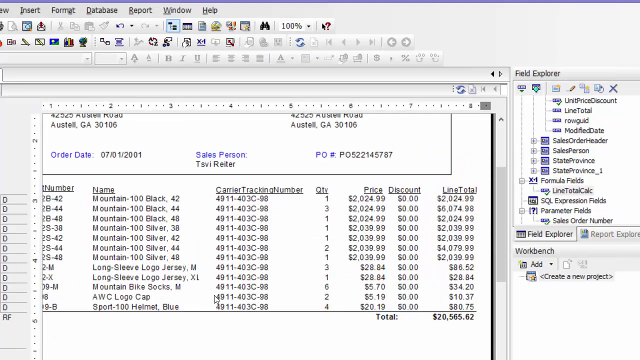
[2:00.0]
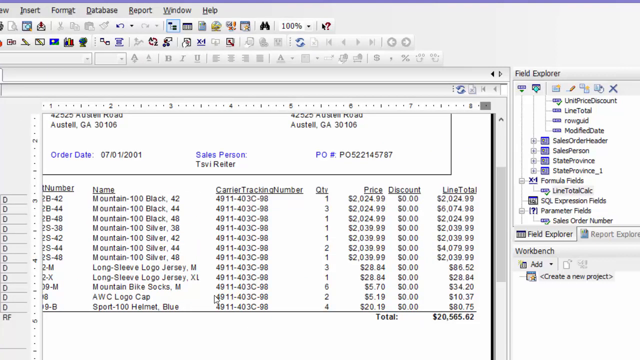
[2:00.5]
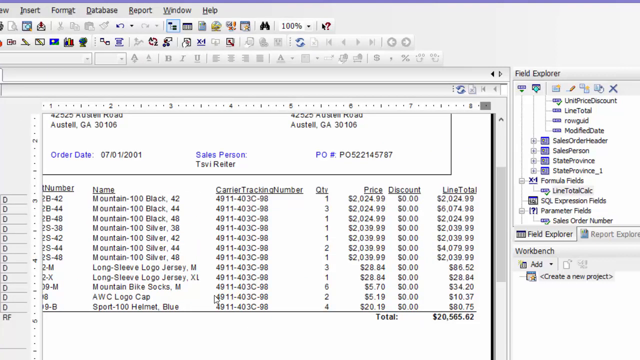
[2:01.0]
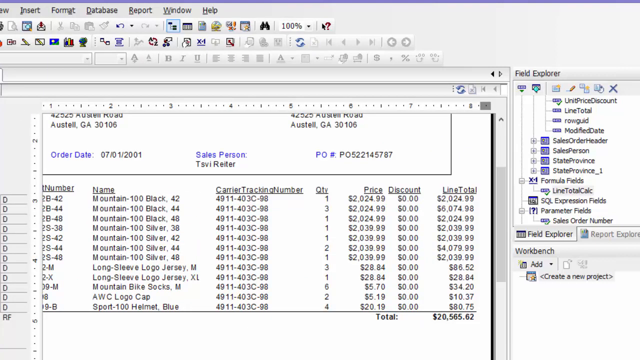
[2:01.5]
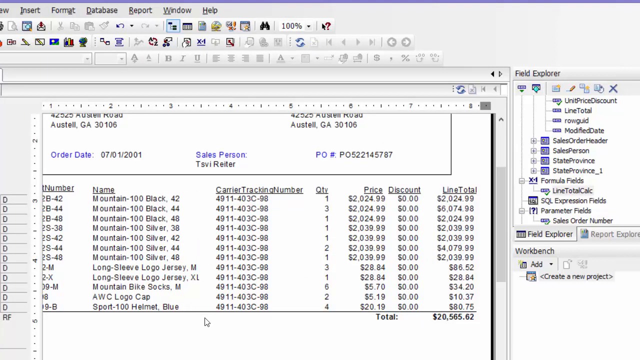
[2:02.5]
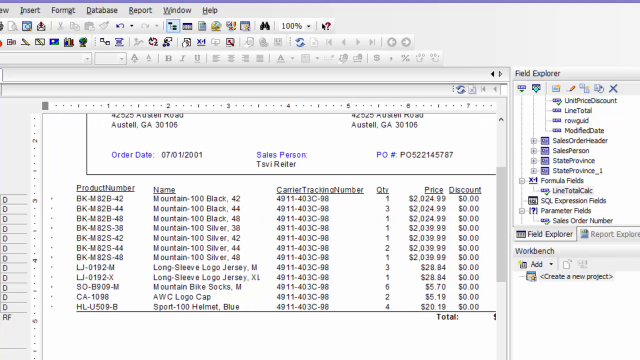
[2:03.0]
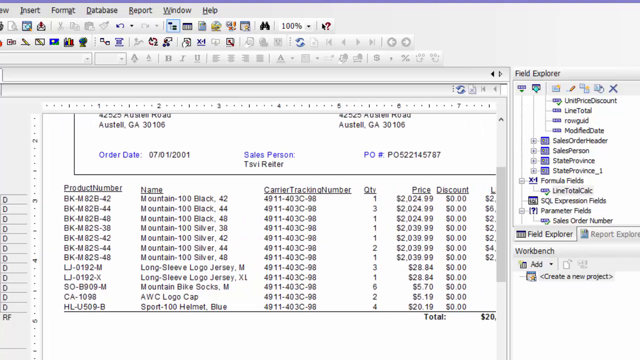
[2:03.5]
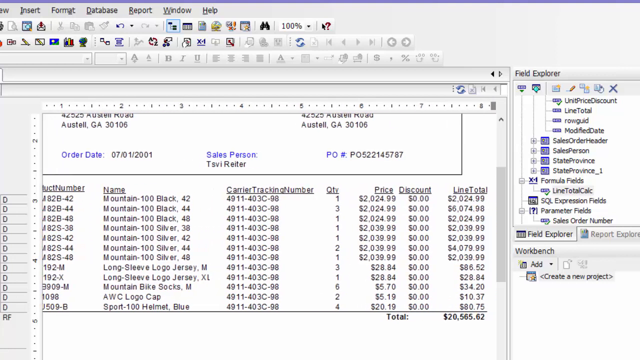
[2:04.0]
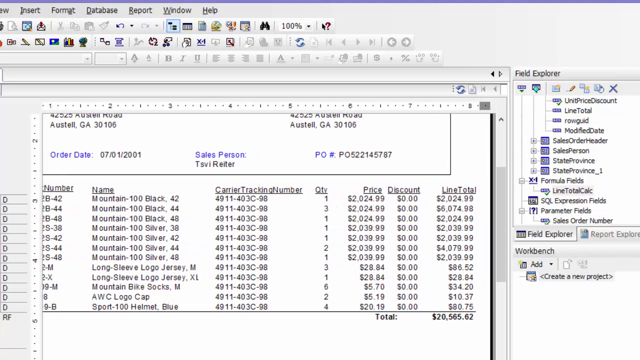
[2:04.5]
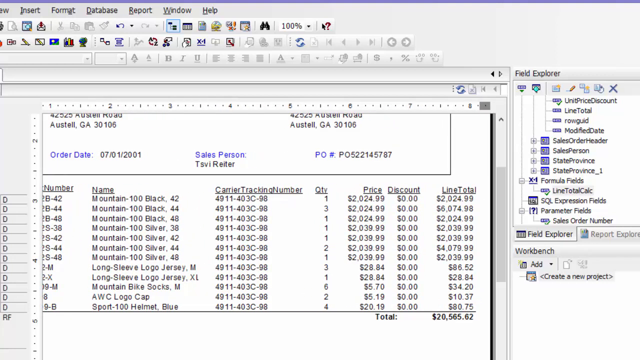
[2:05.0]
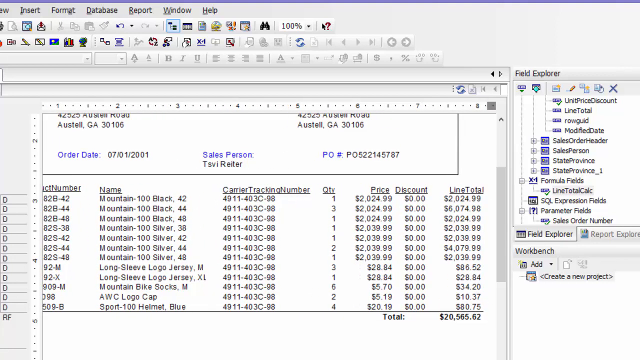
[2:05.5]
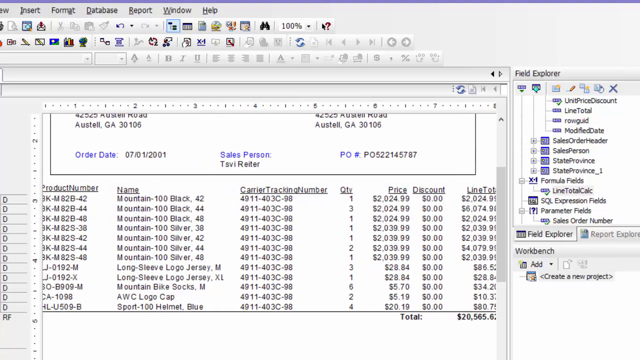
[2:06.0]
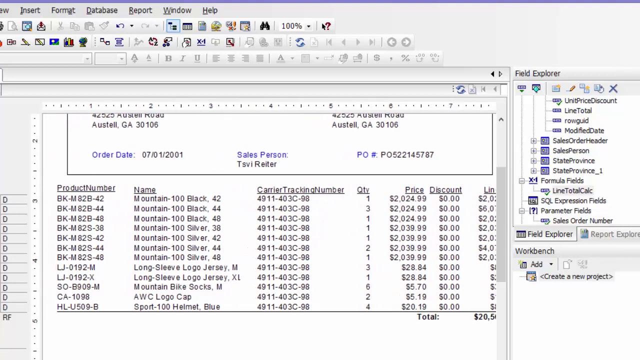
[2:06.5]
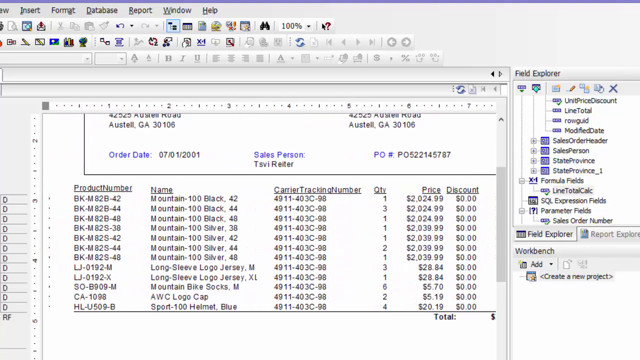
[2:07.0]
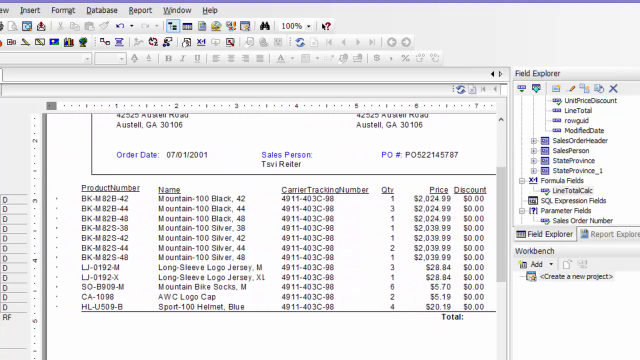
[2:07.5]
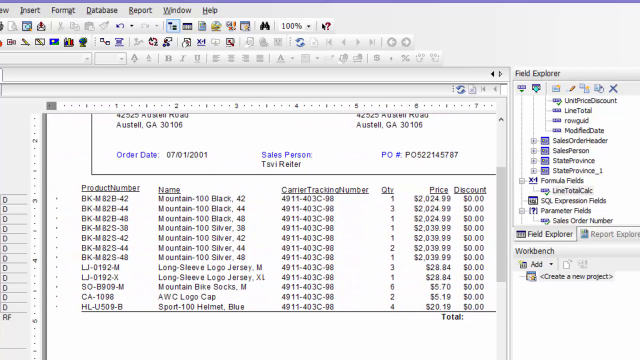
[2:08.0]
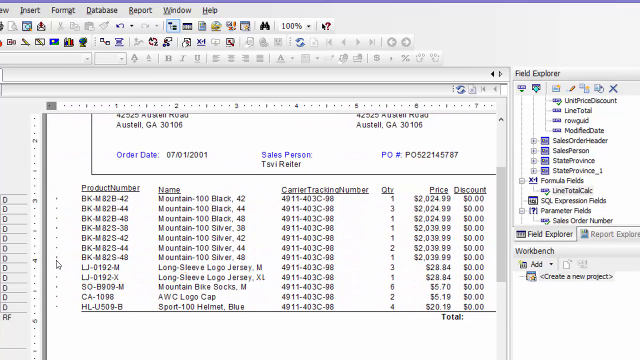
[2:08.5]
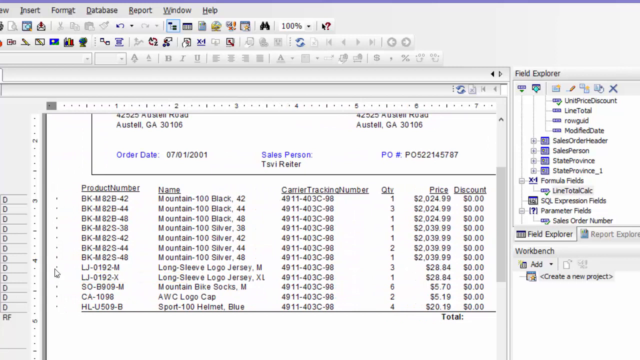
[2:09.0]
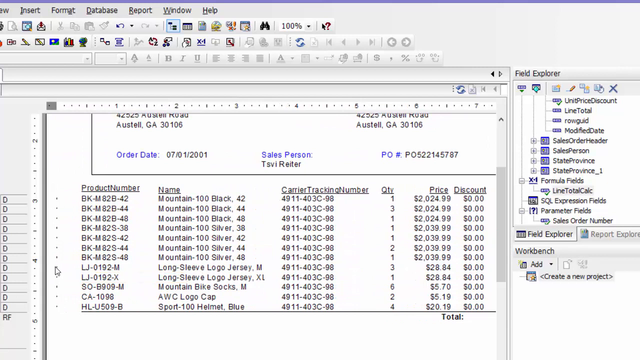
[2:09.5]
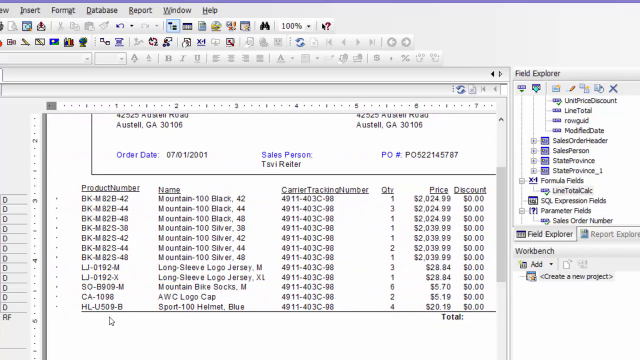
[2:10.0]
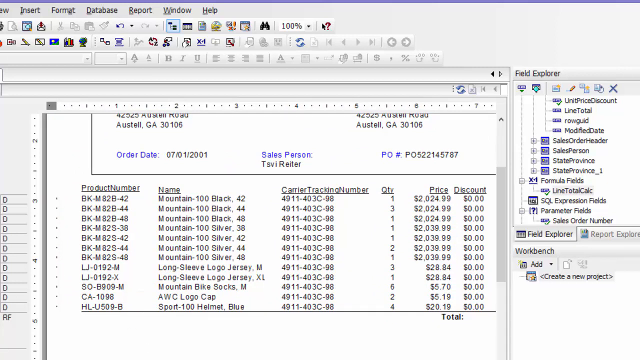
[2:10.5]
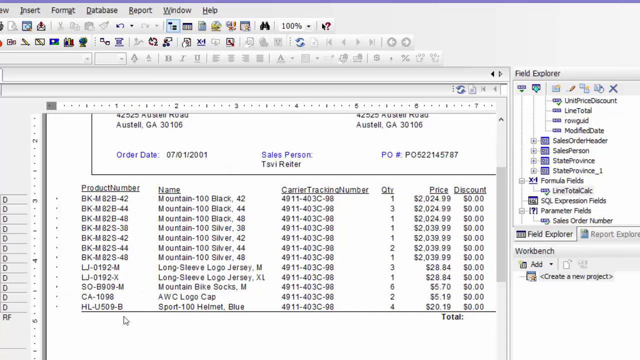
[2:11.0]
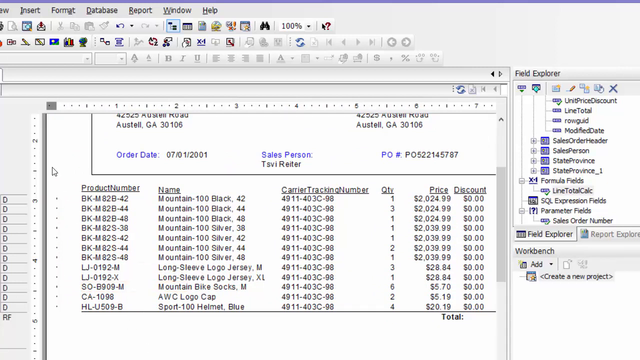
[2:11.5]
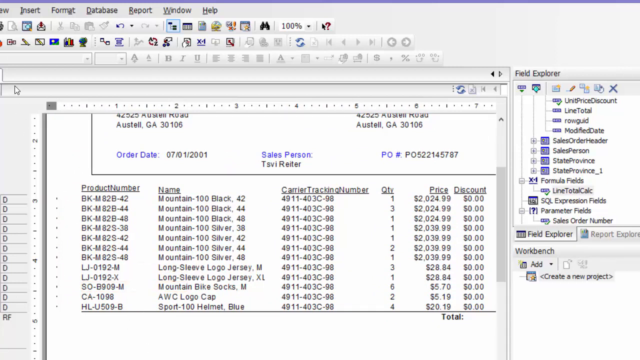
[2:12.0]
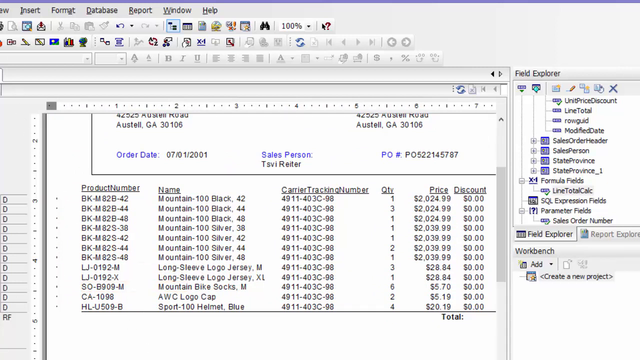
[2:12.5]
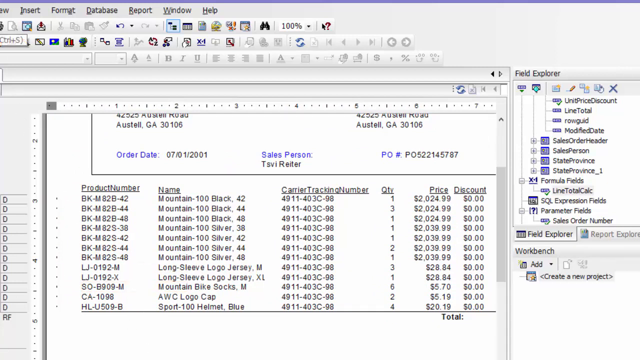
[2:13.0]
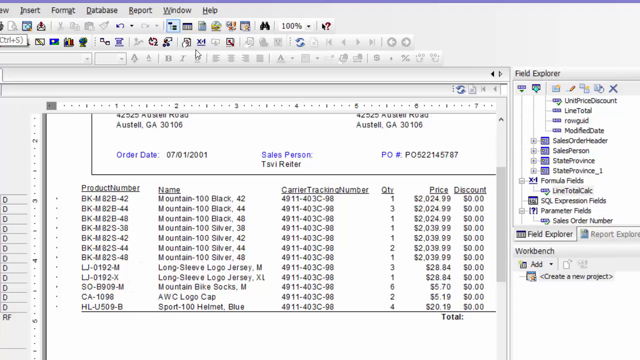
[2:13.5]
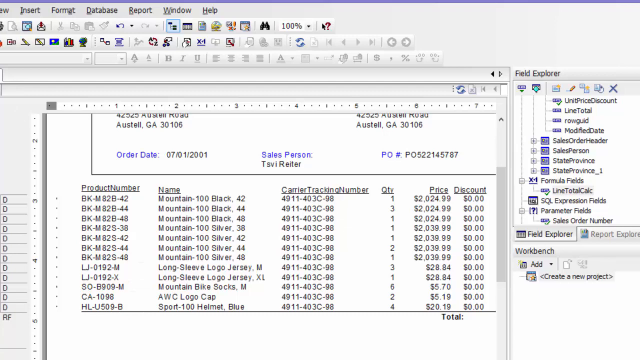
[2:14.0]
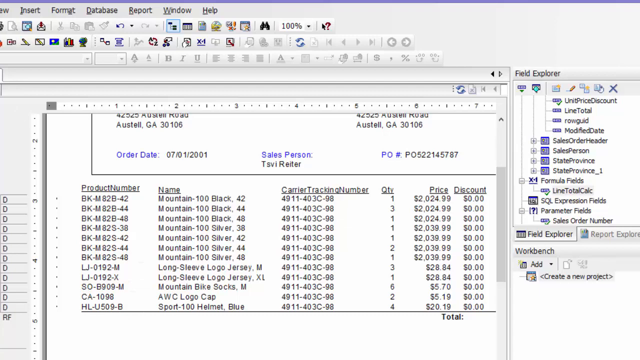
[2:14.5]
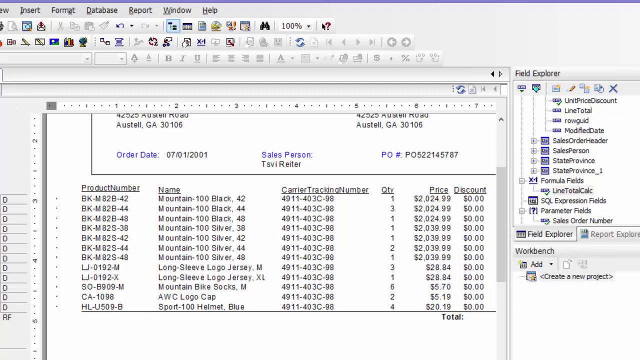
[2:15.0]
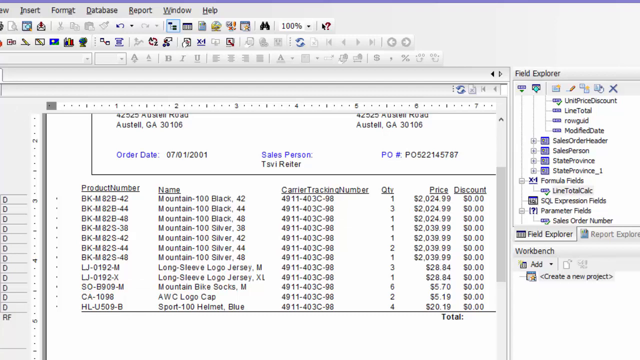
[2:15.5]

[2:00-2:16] The user moves the page a little to the left so the product number information is easier to see. To the left of each product number is a little asterisk. The view scrolls right a little, then slightly left again. They appear to look at one of the asterisks, hovering over it for a second without clicking. They go back up to the part that is cut off, apparently to file, and a little caption box pops up with a shortcut key. On the right side, past the document, there is a gray vertical box used to scroll up or down. The user keeps shifting the product number information left and right. For a second, when they go right over the asterisks, there appears to be a plus sign as well, and then they click off of it. They hover over save, and a faint yellow box with a little shadow under it pops up, reading "(control + s)".